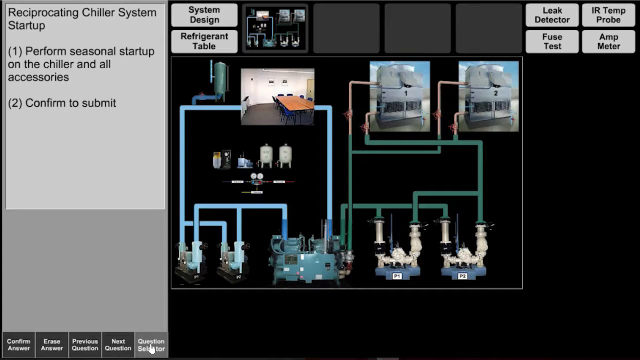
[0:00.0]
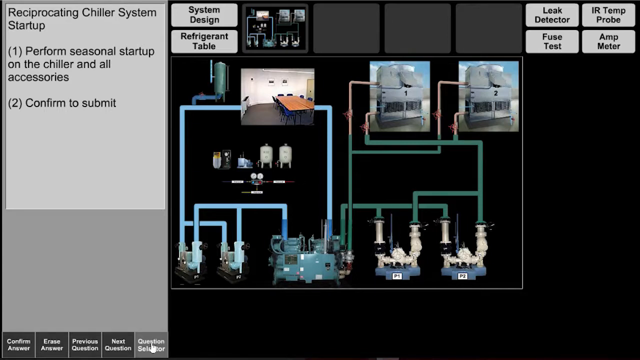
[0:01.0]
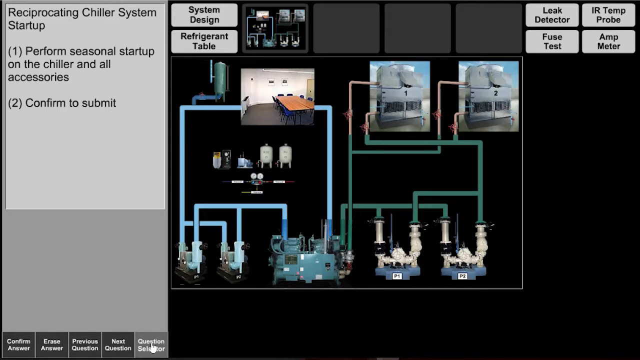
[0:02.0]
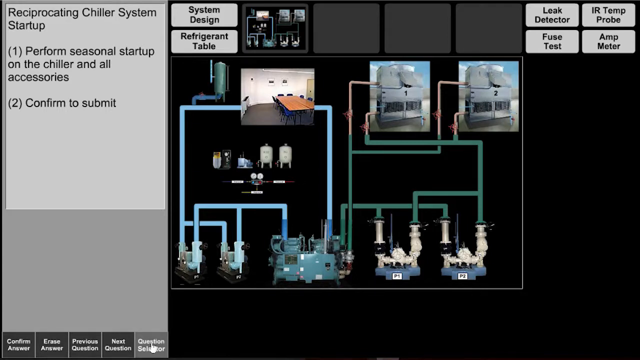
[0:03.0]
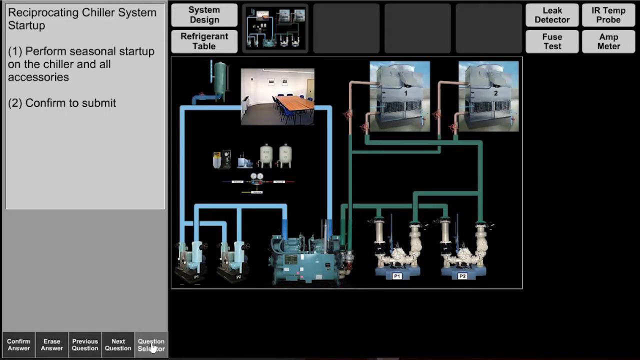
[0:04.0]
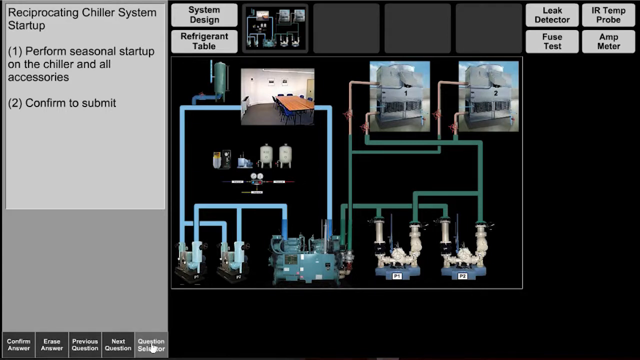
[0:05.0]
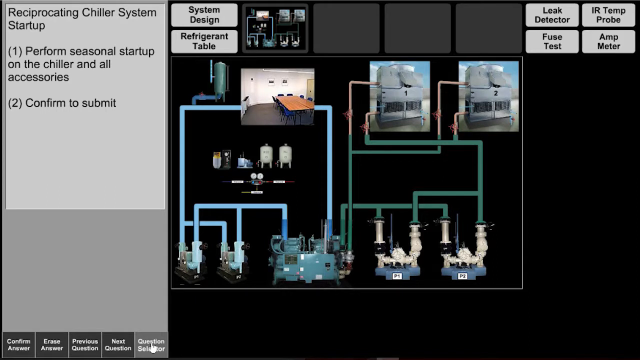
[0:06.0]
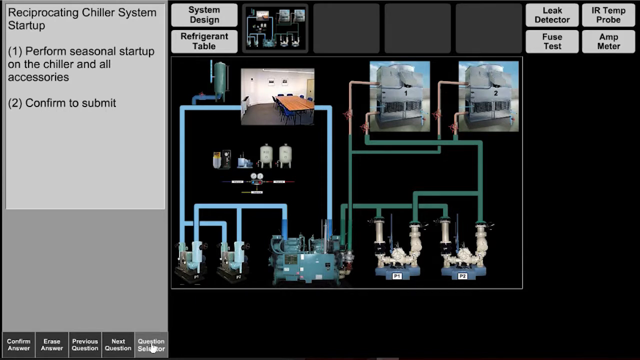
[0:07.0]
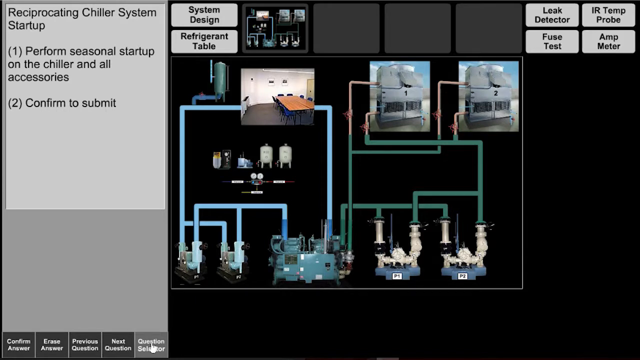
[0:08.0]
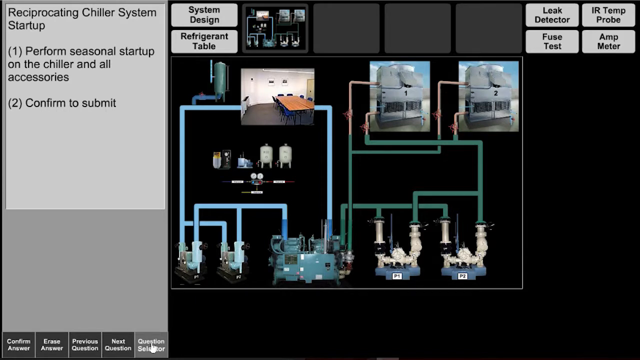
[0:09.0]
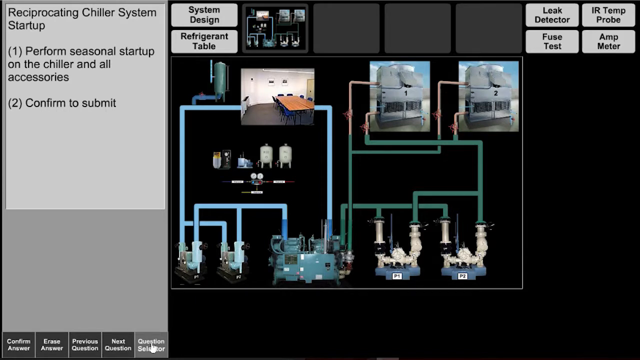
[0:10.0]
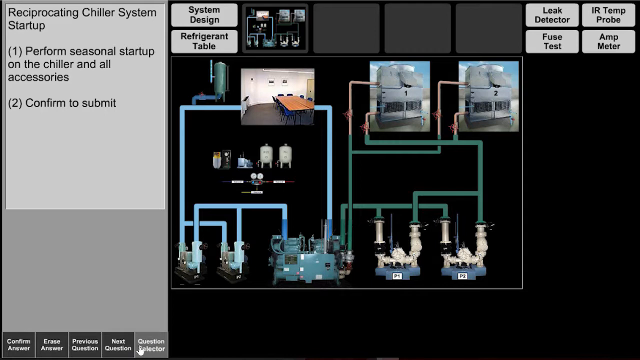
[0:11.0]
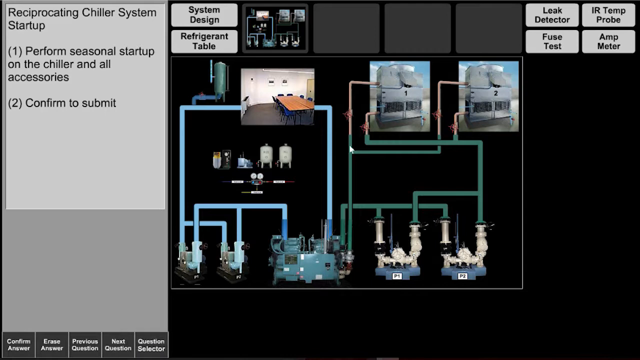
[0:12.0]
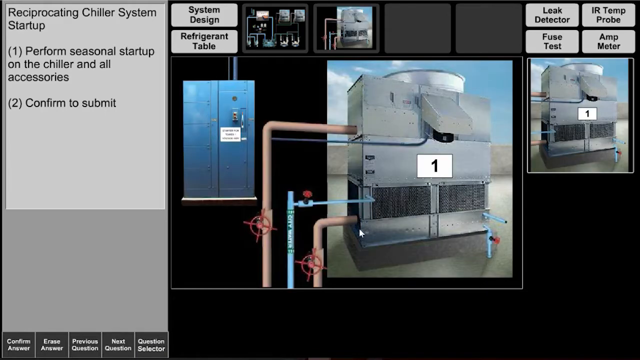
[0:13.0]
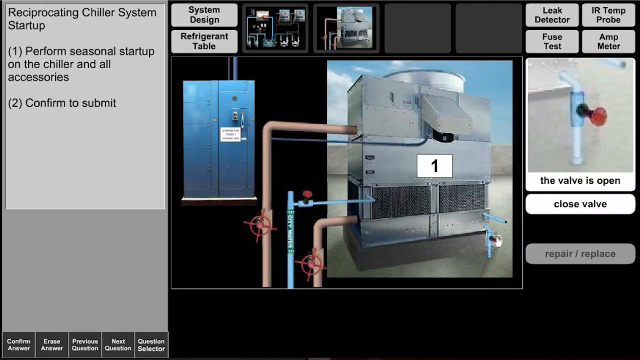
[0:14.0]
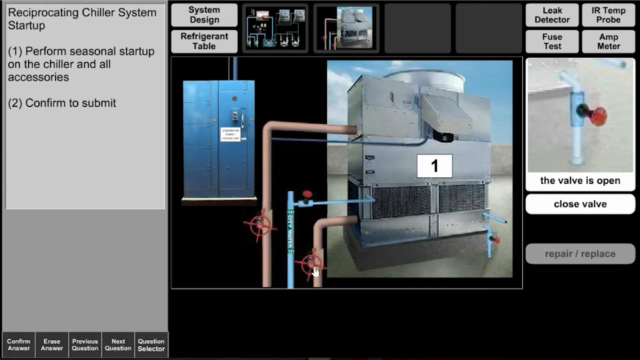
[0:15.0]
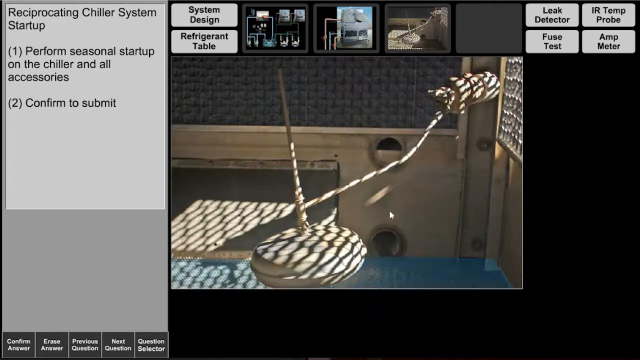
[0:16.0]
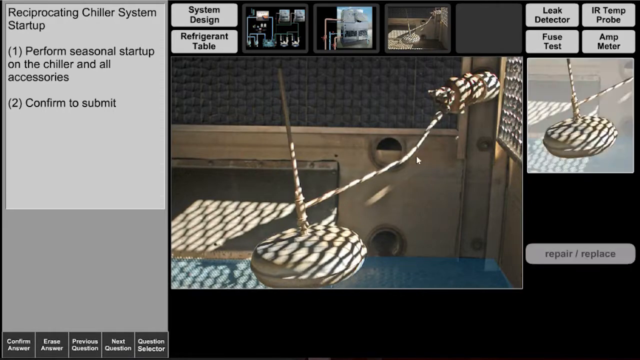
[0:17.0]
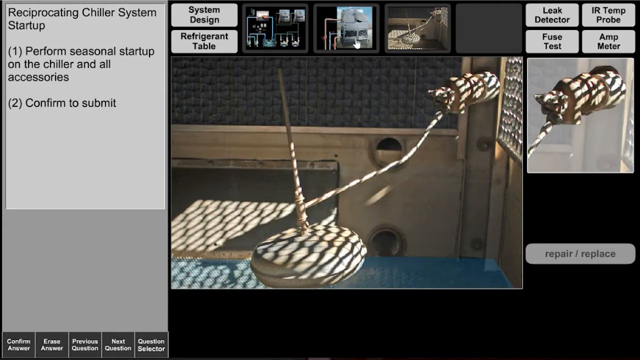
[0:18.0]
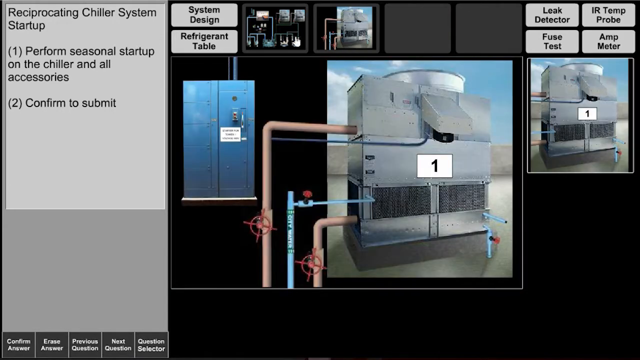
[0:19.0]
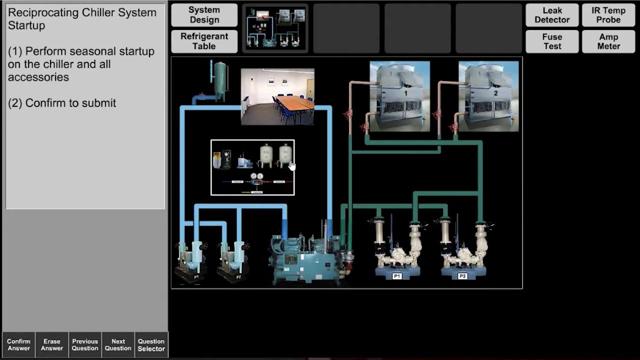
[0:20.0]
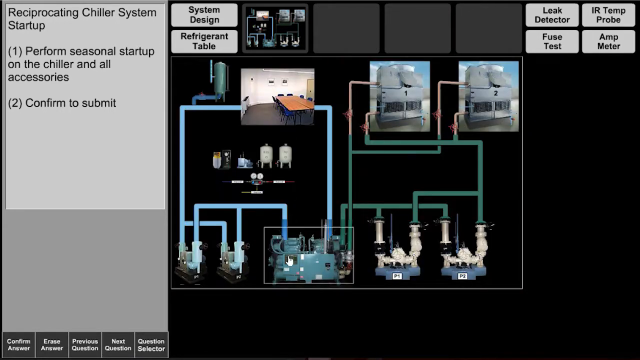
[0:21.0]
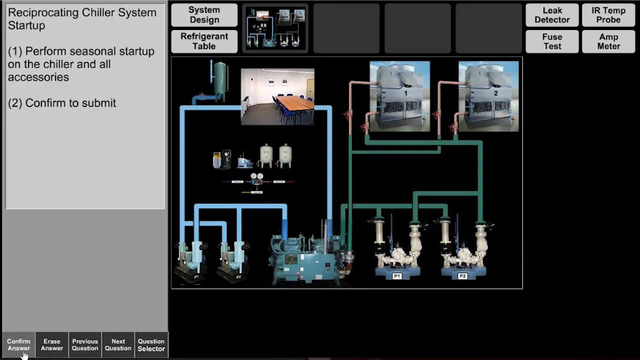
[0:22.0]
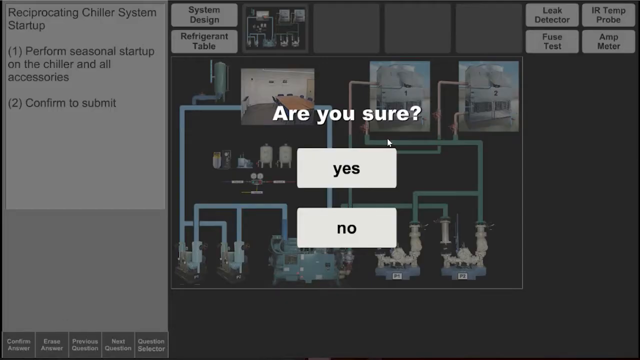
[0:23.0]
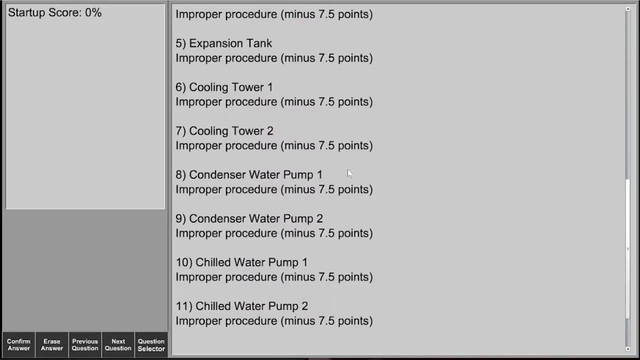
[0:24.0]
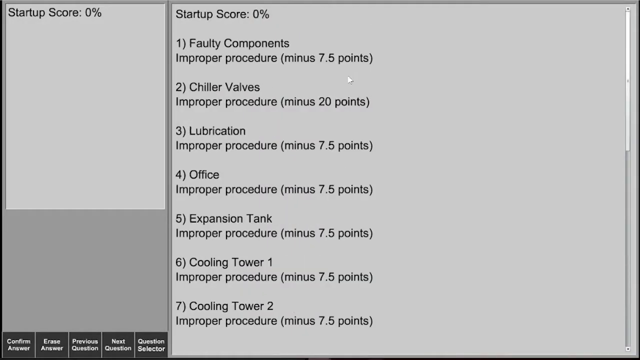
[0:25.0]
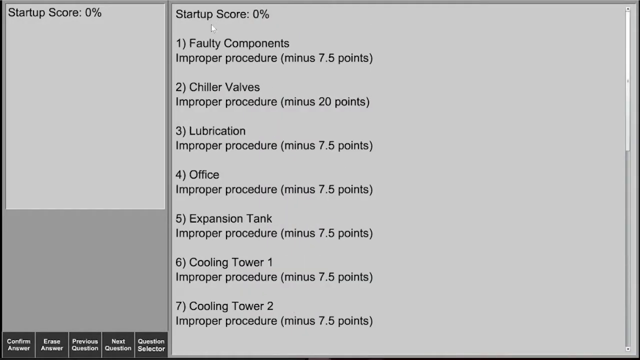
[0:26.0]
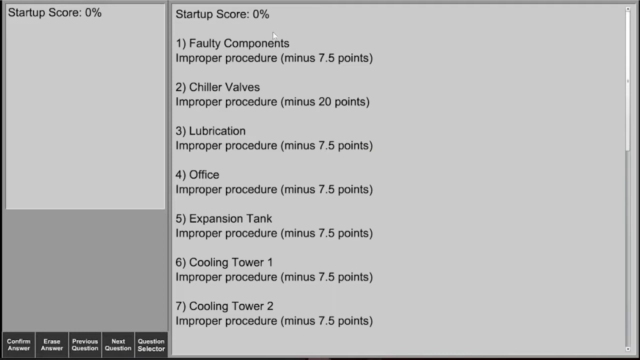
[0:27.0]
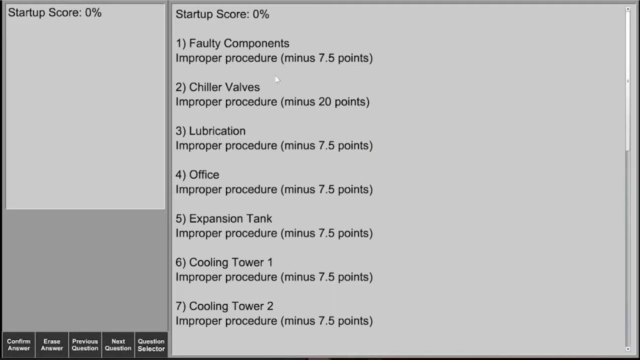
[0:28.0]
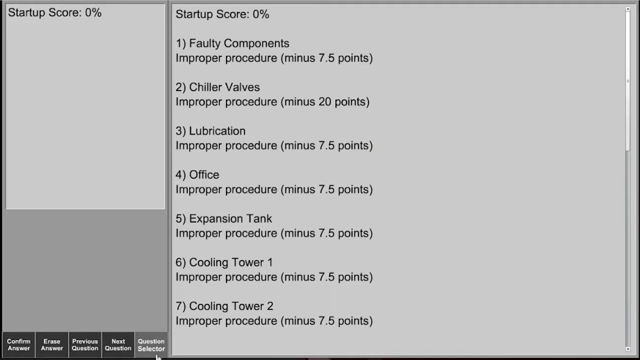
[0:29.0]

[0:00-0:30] An interactive display shows a reciprocating chiller system startup process flow diagram. Instructions for use appear in a box on the left. The display includes various pictures of the components used in the process flow, along with clickable items such as system design, refrigerant table and leak detector. Clicking on something brings up different images and displays of the process the user needs to follow. A confirmation prompt asks "are you sure?" A startup score shows improper procedures and correct procedures. Gauge-like buttons show the various states, alongside a confirm-to-submit button. Clicked images bring up bigger displays of the process components. Options to click include system design, refrigerant, leak detection, IR temp probe, fuse test and amp meter.